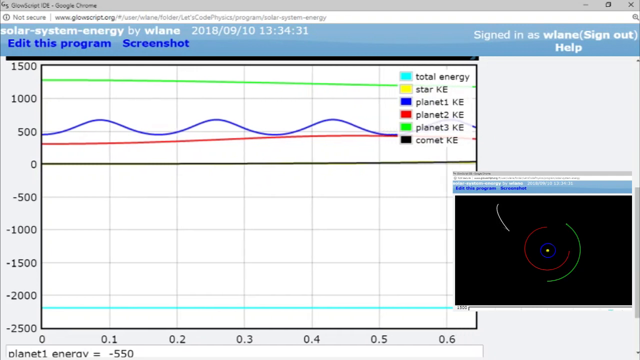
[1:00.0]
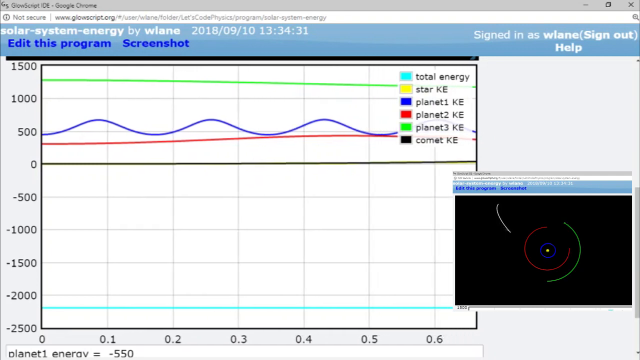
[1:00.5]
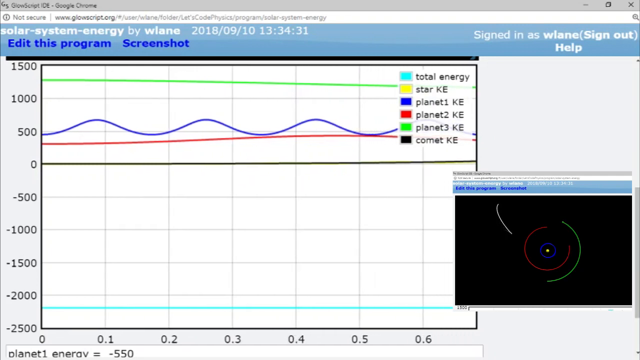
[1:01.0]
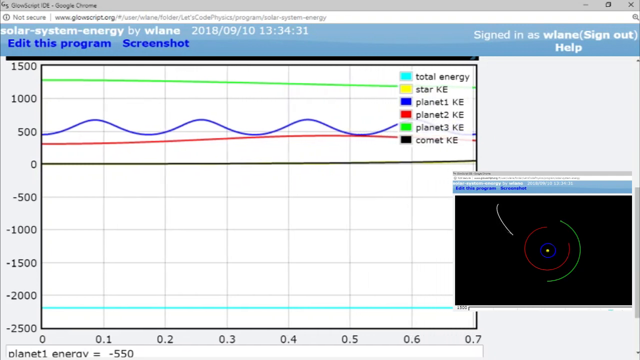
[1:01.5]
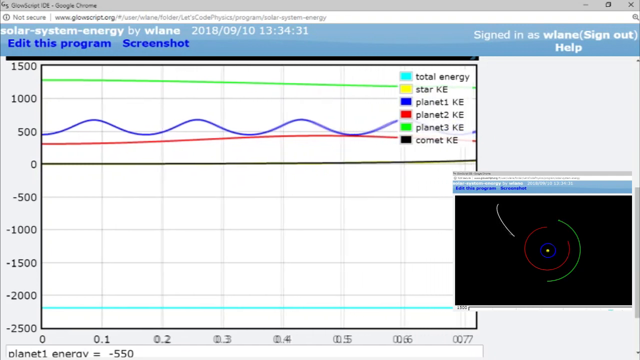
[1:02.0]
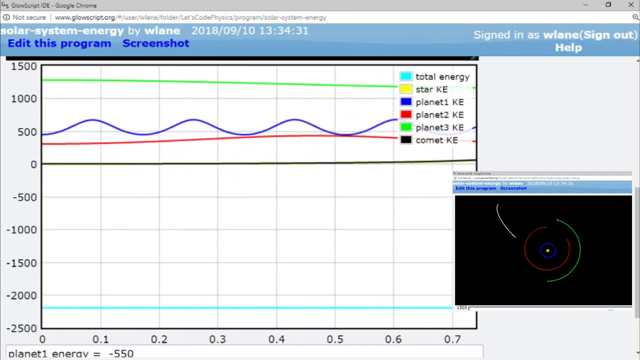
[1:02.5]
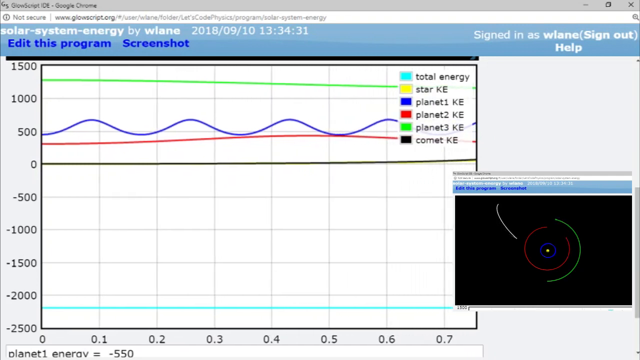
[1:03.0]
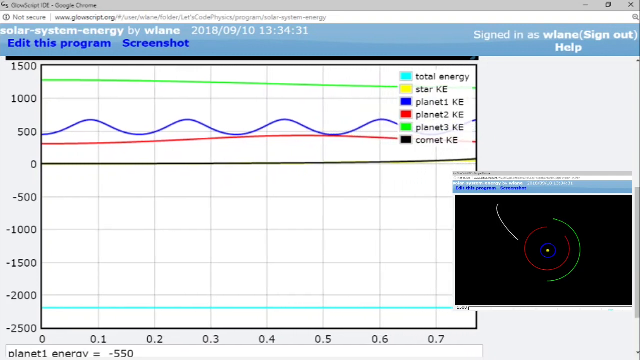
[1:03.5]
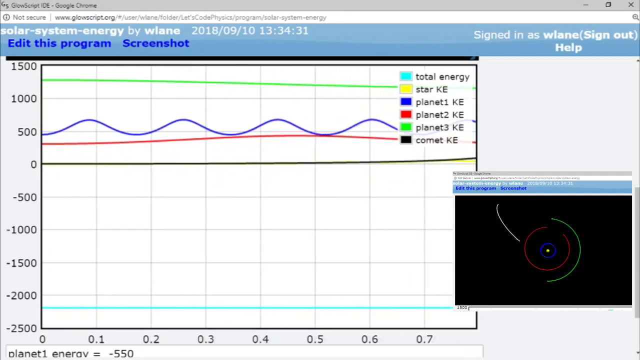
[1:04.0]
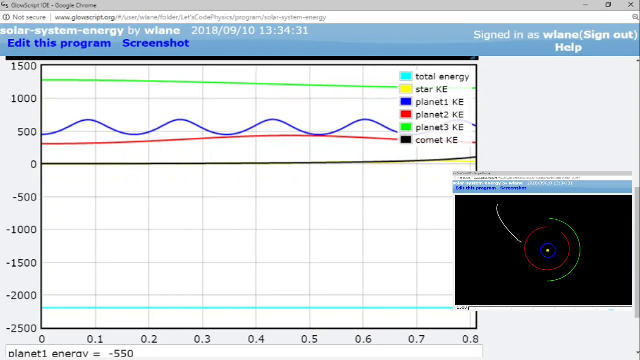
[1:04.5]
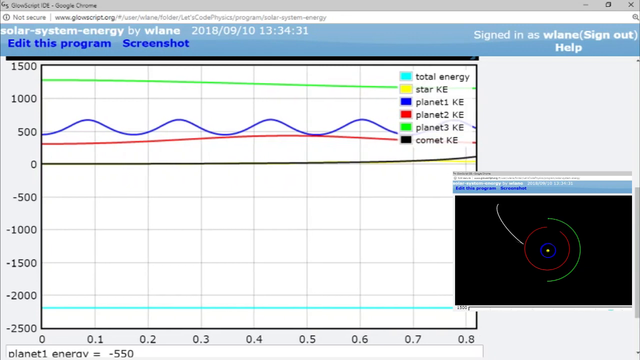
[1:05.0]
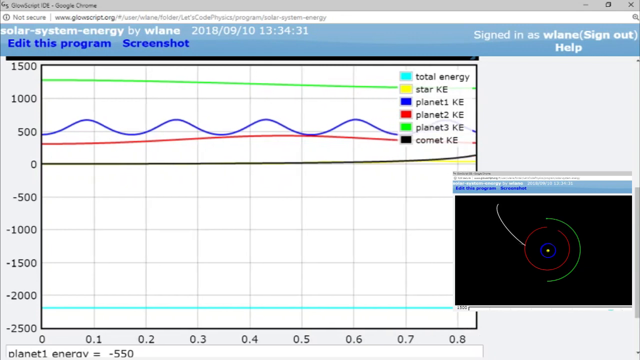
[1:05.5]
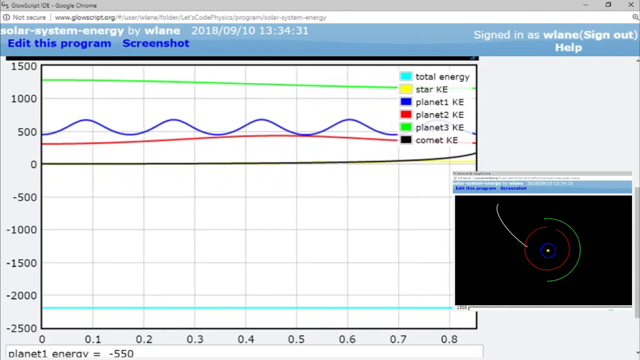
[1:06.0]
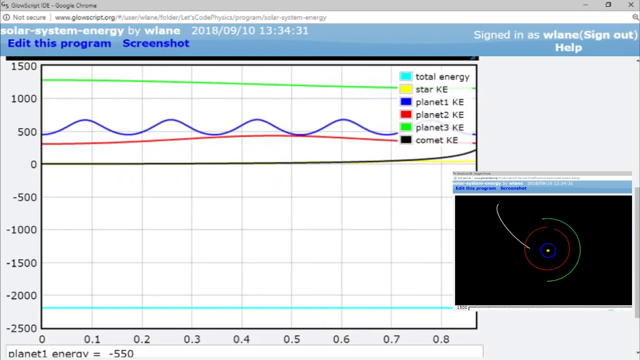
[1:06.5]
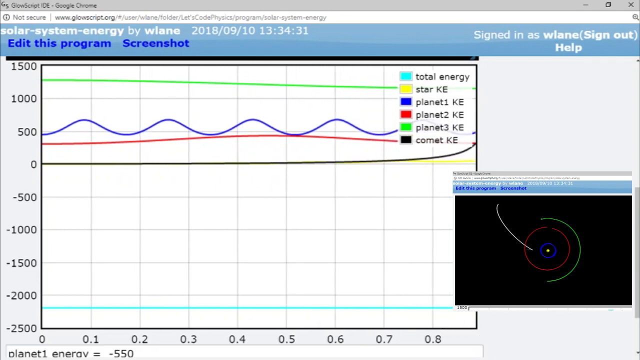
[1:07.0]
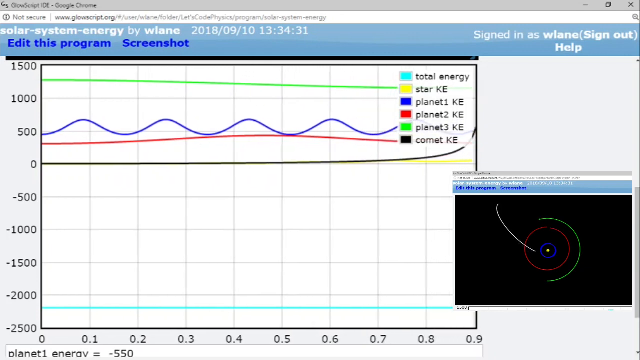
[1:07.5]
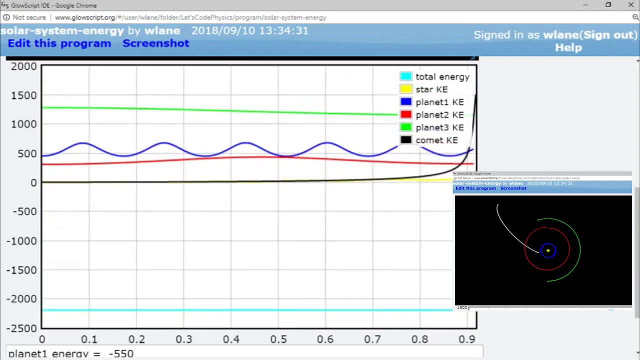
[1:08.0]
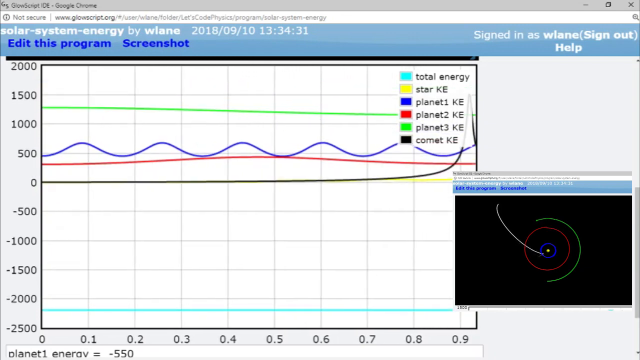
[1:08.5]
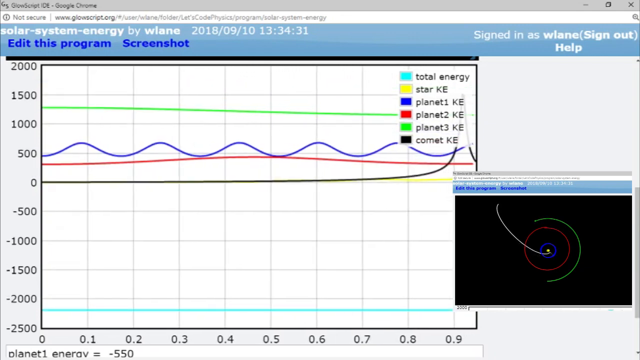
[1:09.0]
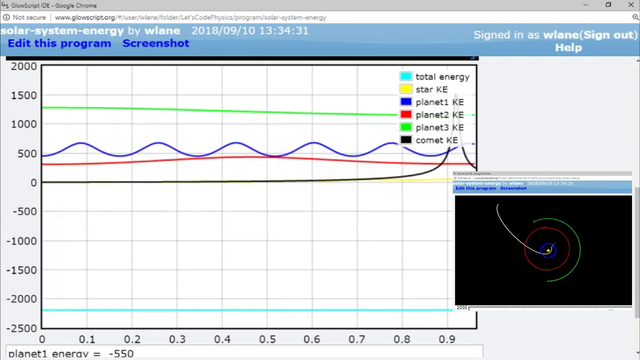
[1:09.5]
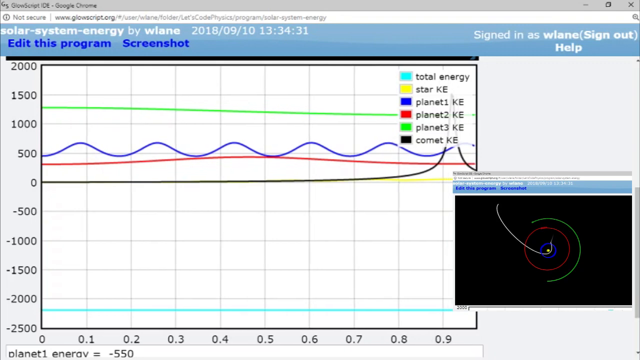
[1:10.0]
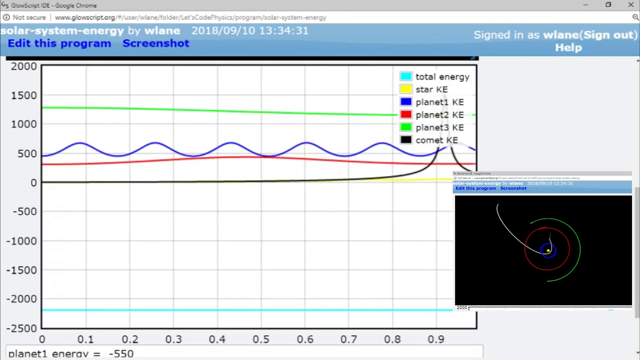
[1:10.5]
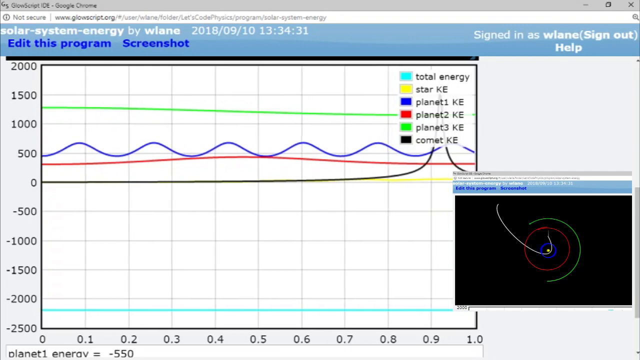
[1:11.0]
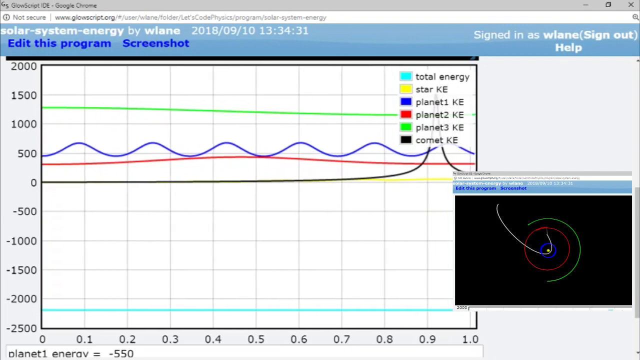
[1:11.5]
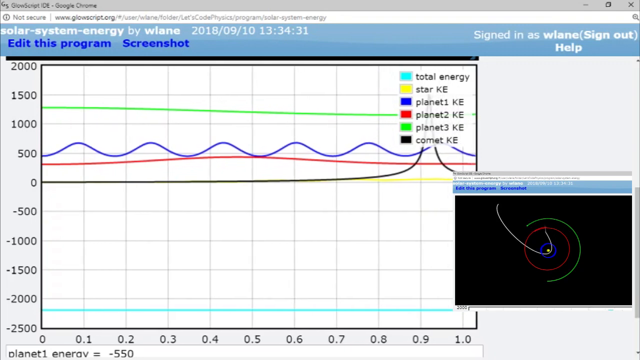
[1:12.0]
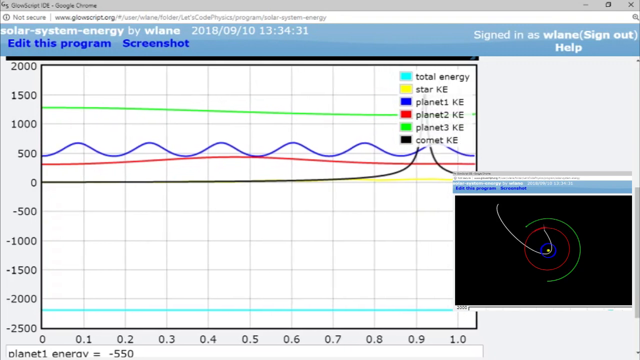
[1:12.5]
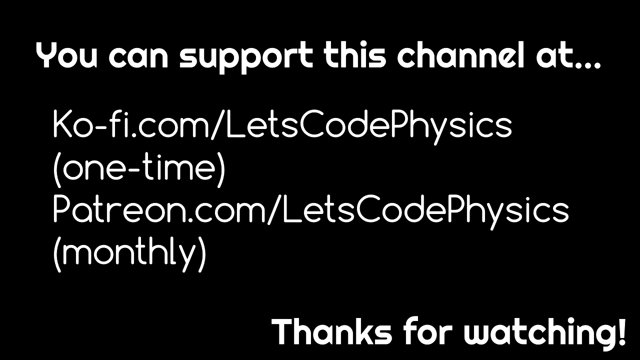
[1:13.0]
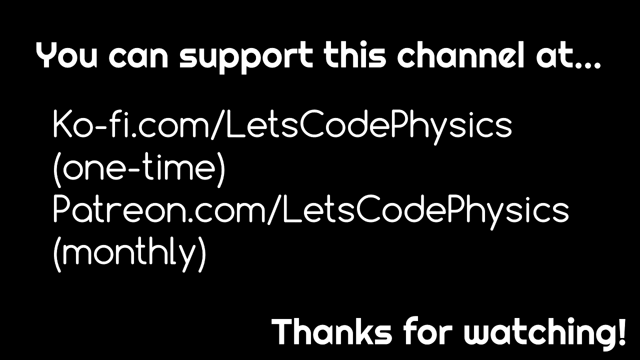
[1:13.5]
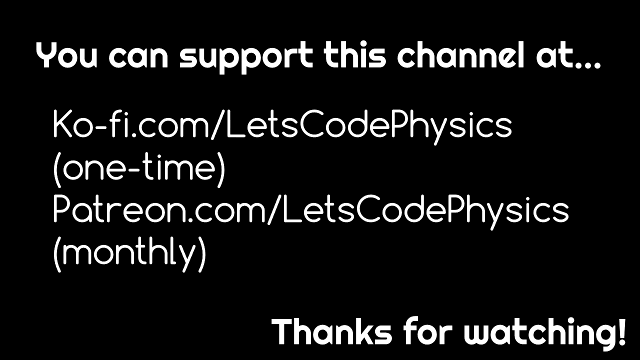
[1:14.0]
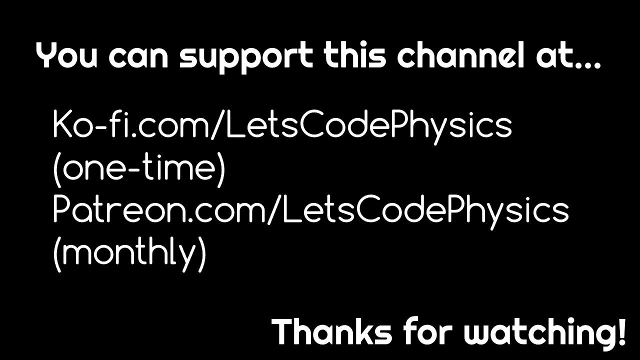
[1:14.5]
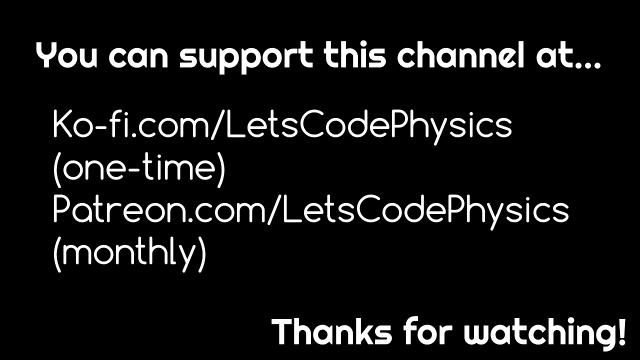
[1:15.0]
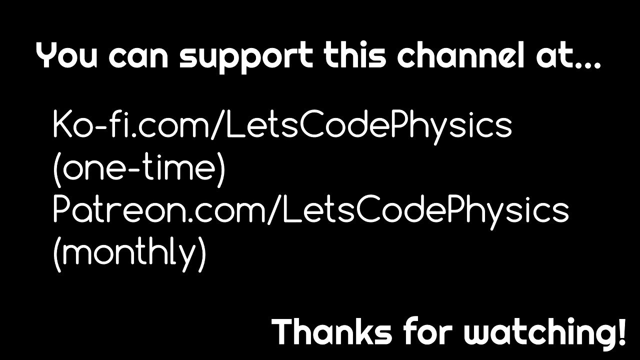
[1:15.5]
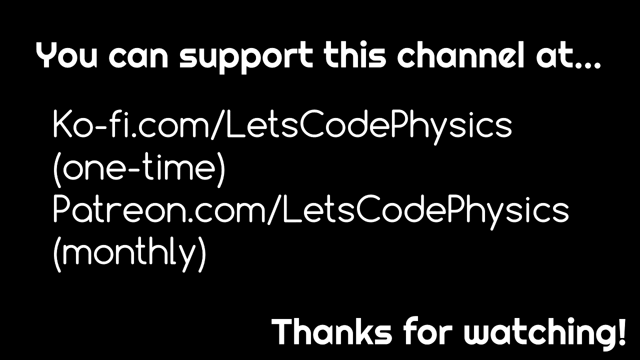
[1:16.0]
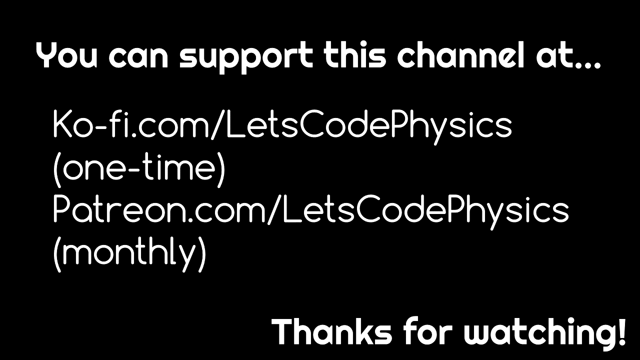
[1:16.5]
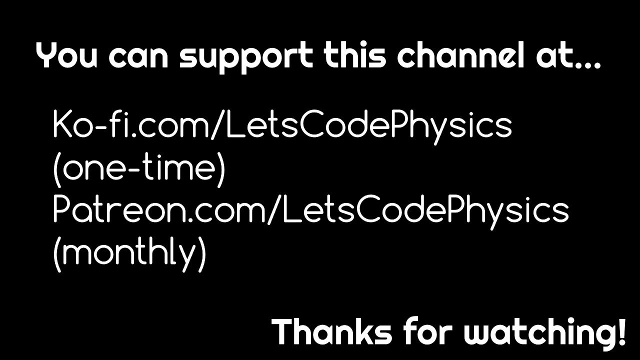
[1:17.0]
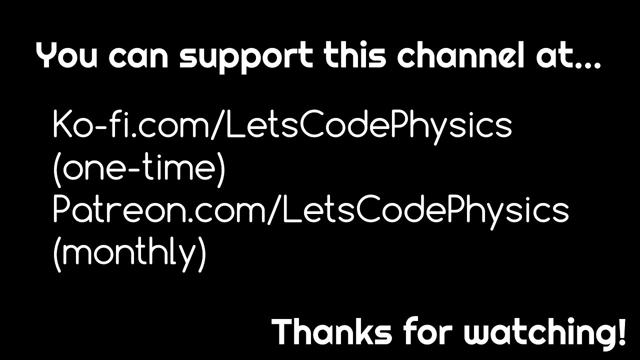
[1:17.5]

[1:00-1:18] Text on screen reads "support this channel at kofi.com" and mentions patreon.com and physics, followed by "thanks for watching".